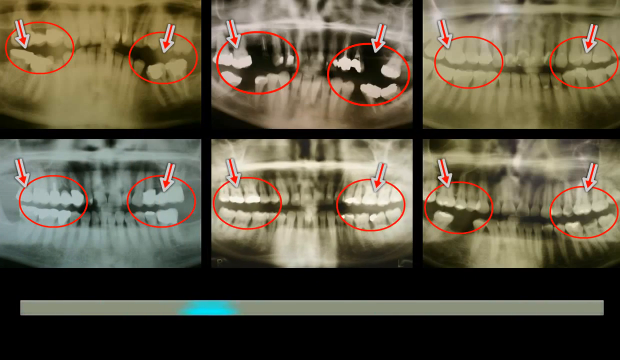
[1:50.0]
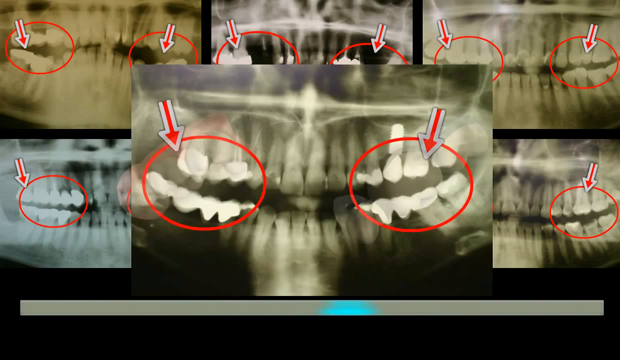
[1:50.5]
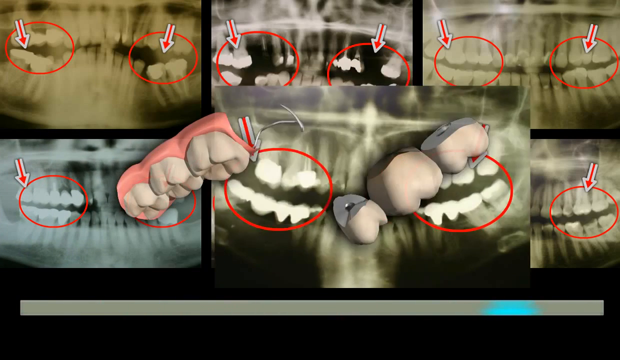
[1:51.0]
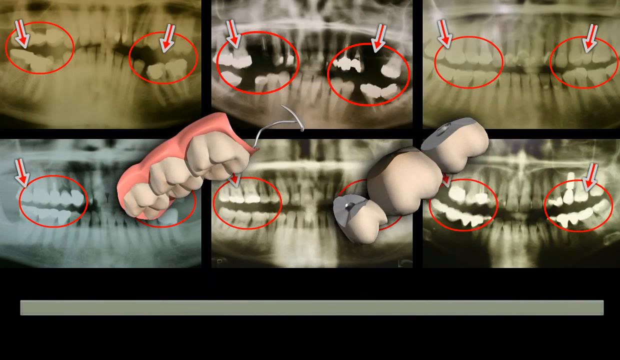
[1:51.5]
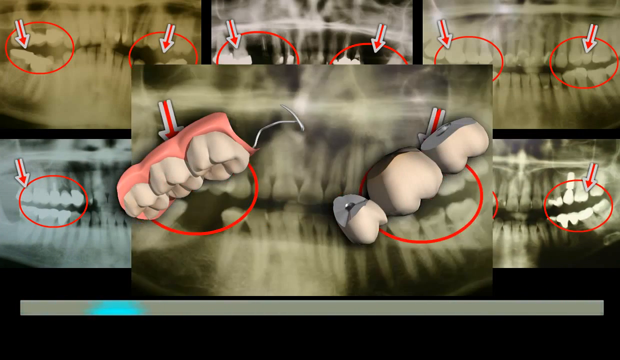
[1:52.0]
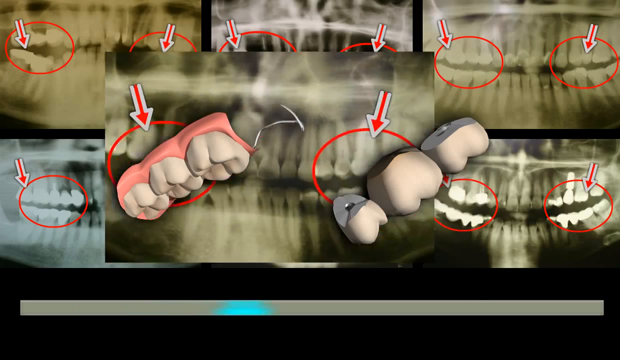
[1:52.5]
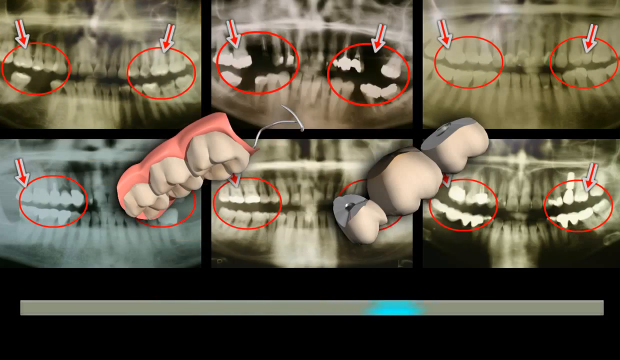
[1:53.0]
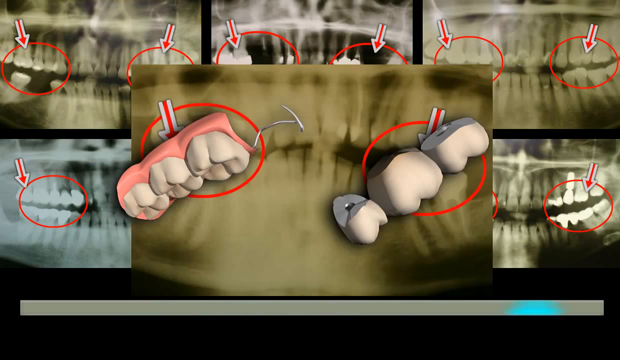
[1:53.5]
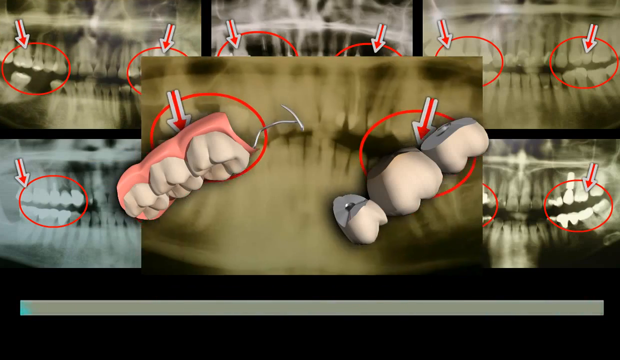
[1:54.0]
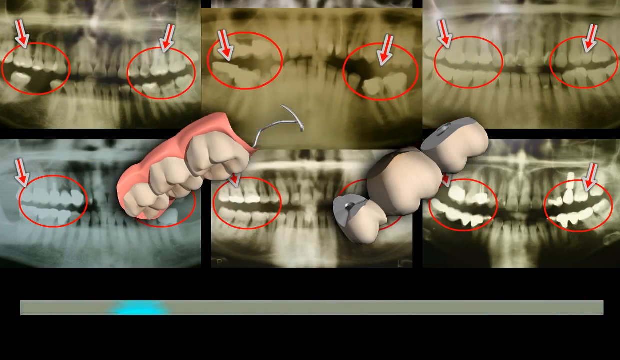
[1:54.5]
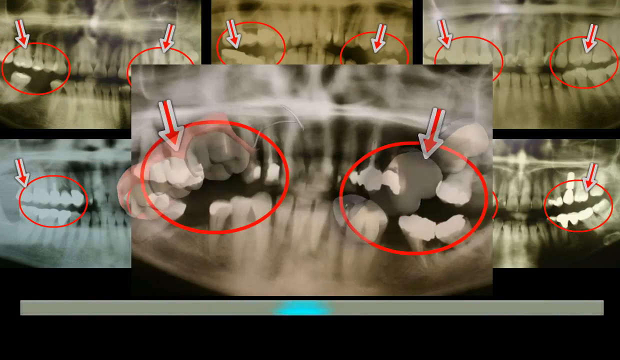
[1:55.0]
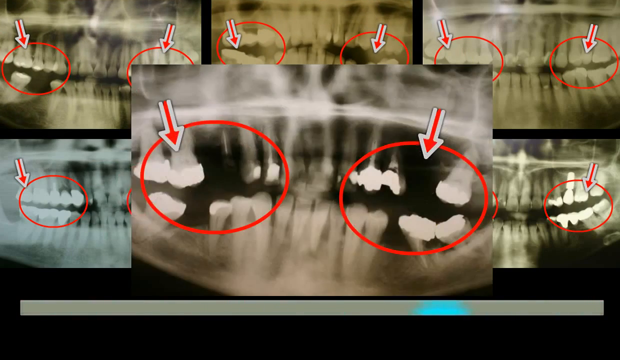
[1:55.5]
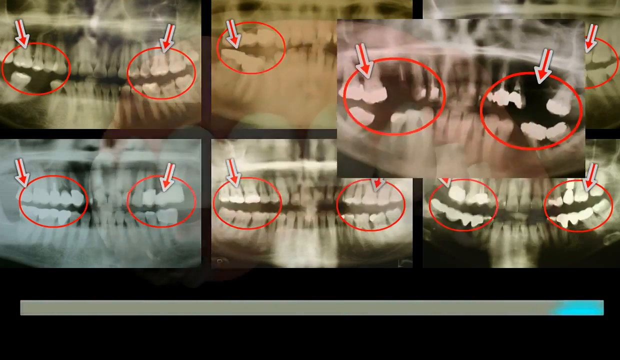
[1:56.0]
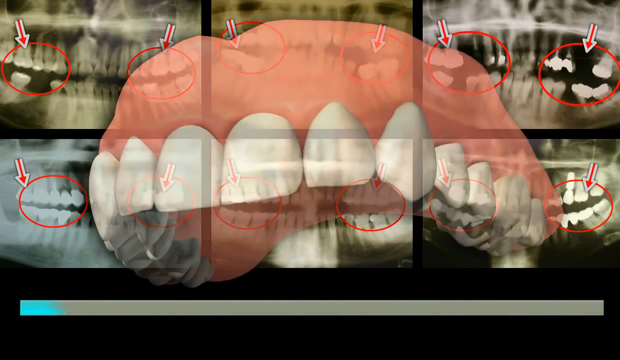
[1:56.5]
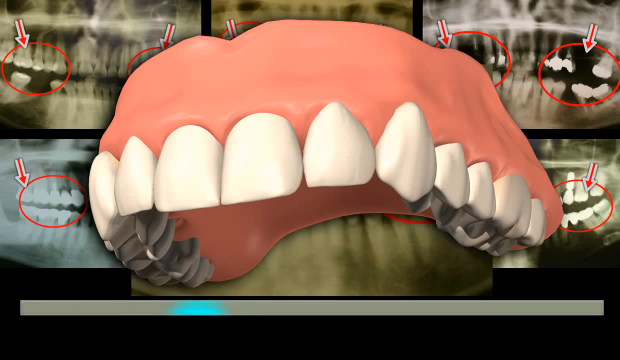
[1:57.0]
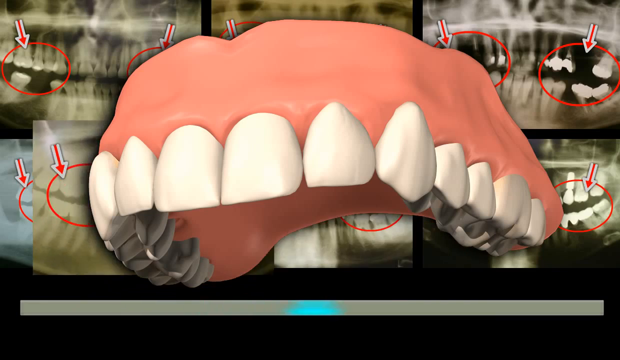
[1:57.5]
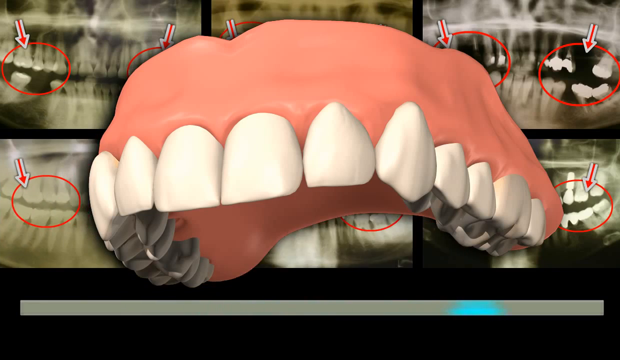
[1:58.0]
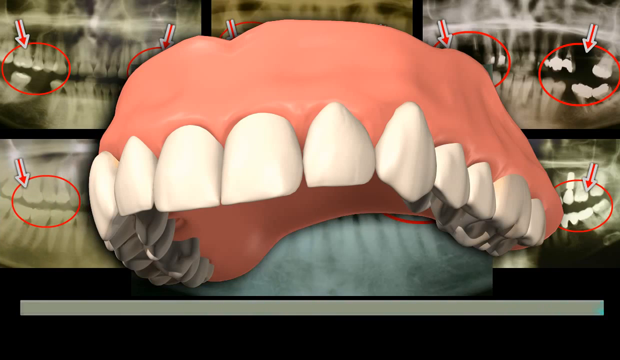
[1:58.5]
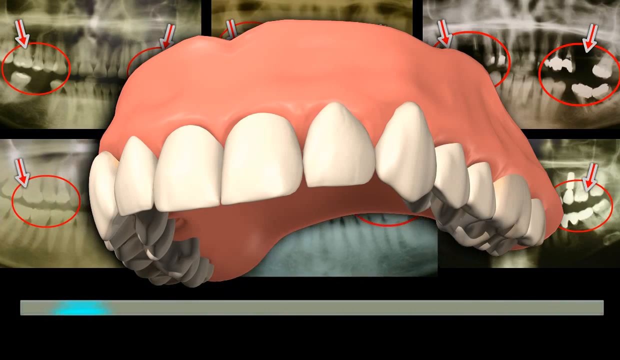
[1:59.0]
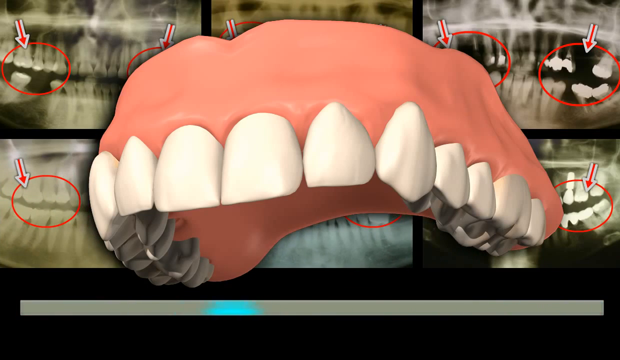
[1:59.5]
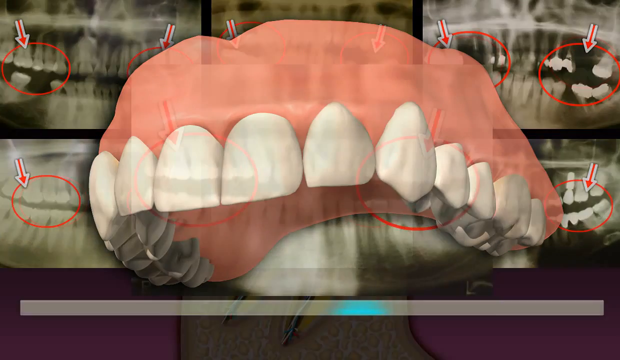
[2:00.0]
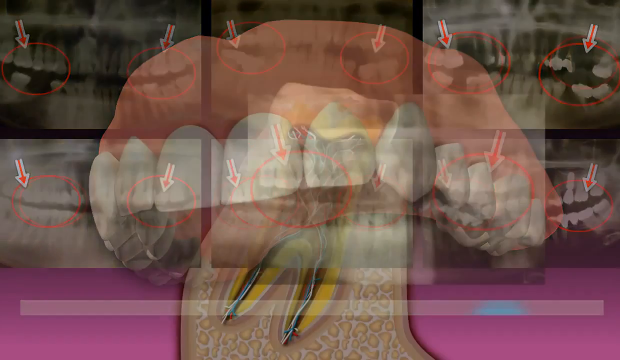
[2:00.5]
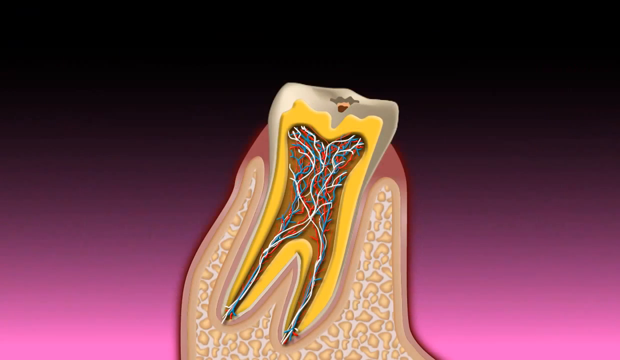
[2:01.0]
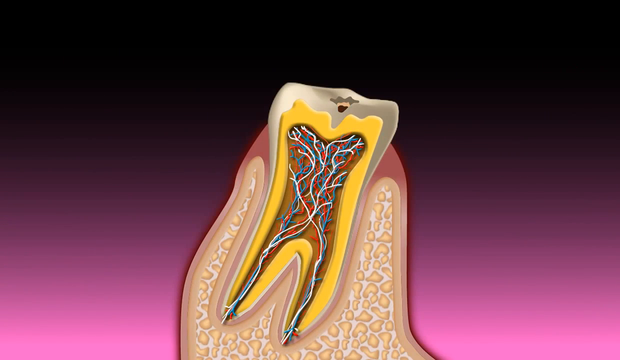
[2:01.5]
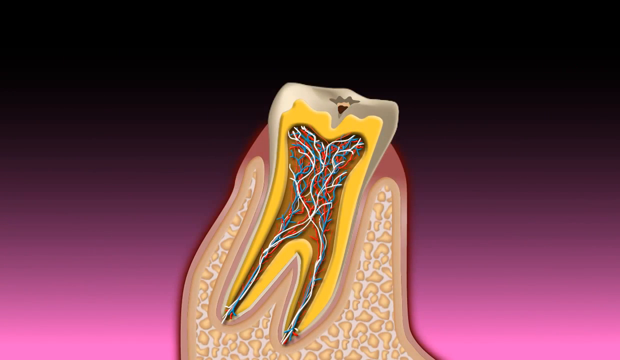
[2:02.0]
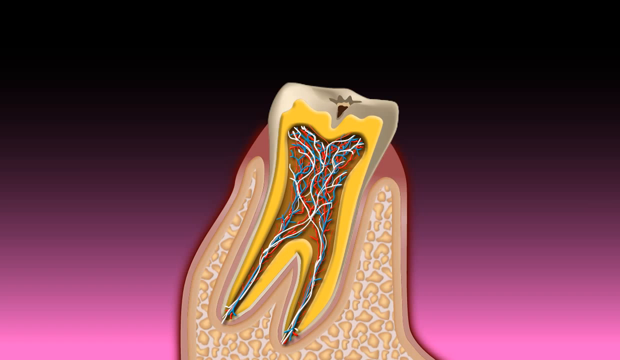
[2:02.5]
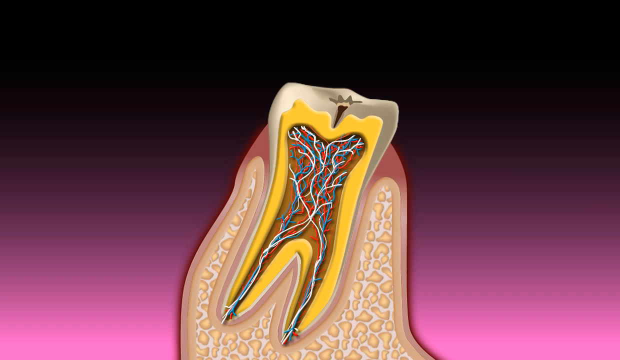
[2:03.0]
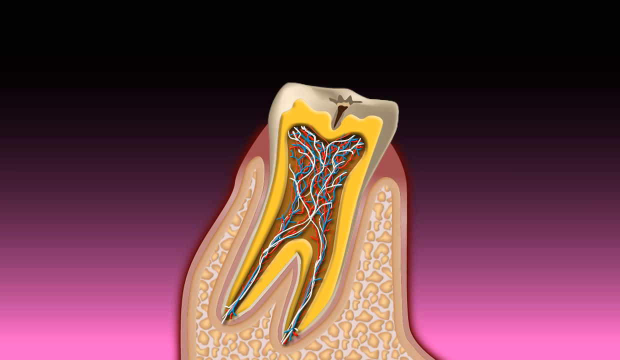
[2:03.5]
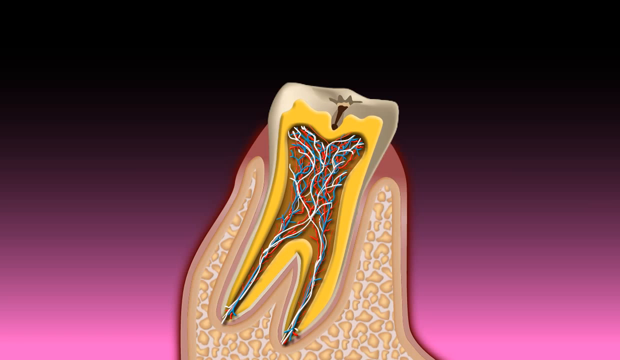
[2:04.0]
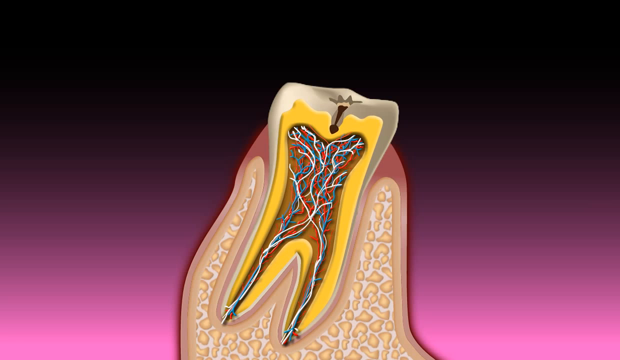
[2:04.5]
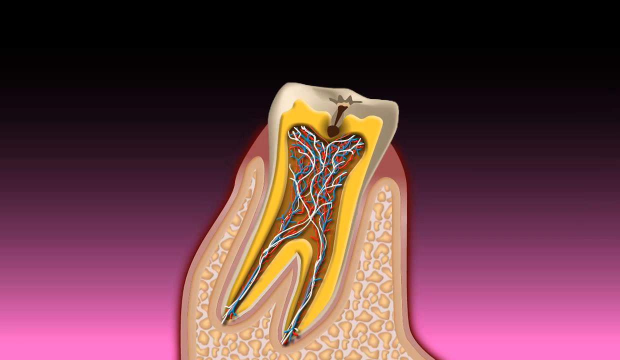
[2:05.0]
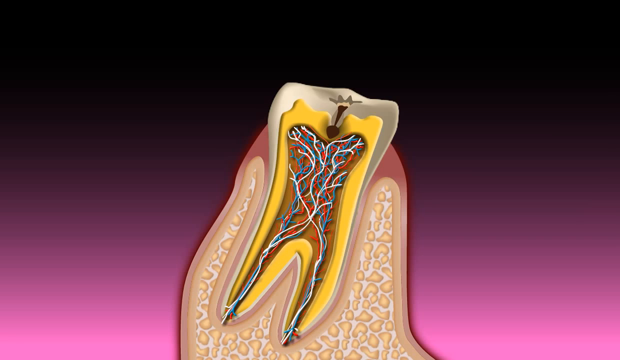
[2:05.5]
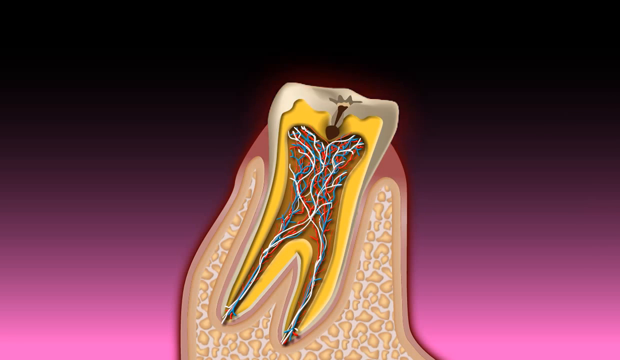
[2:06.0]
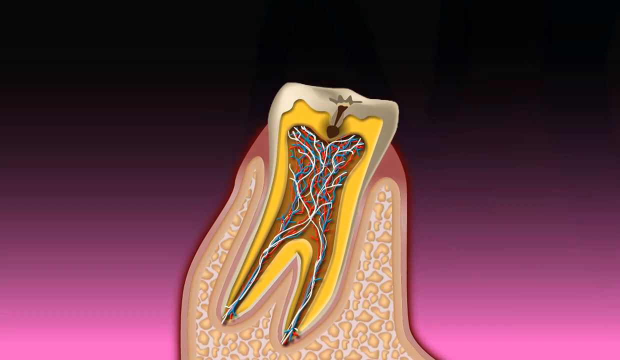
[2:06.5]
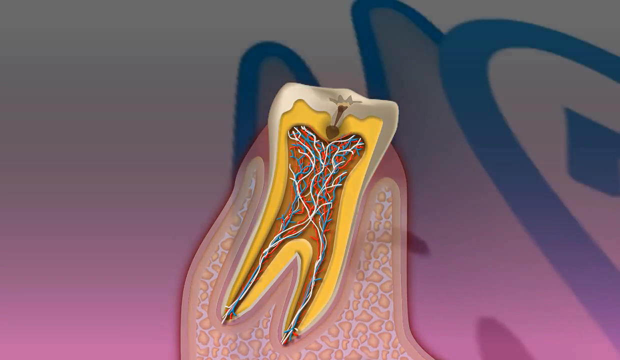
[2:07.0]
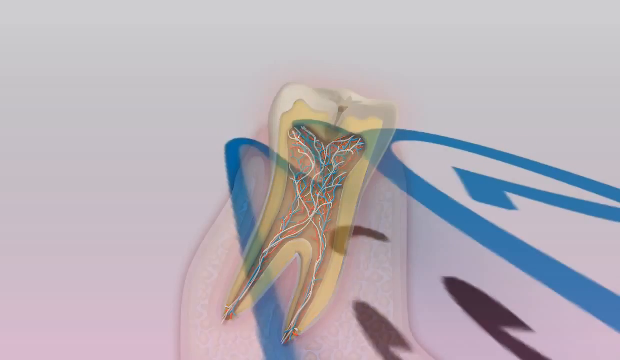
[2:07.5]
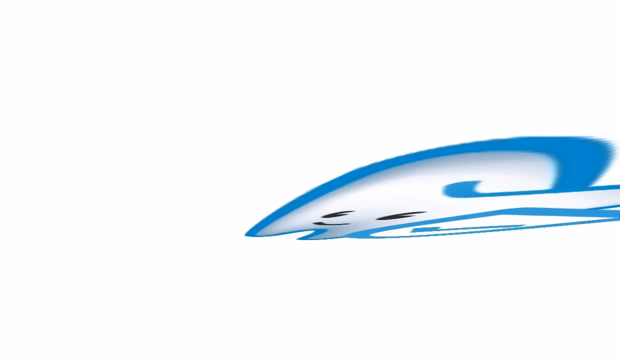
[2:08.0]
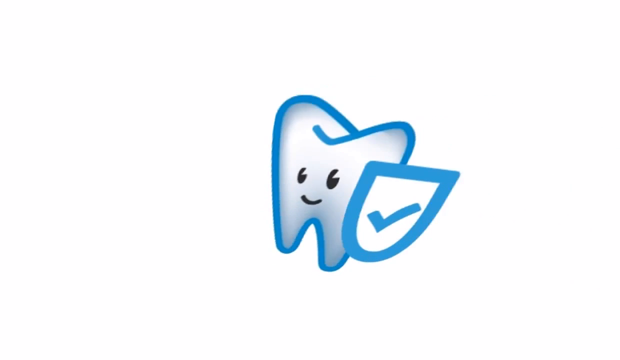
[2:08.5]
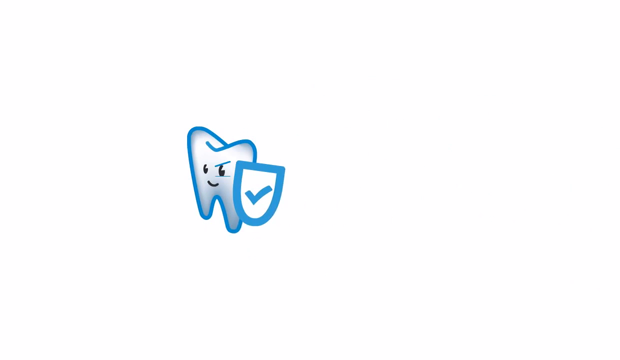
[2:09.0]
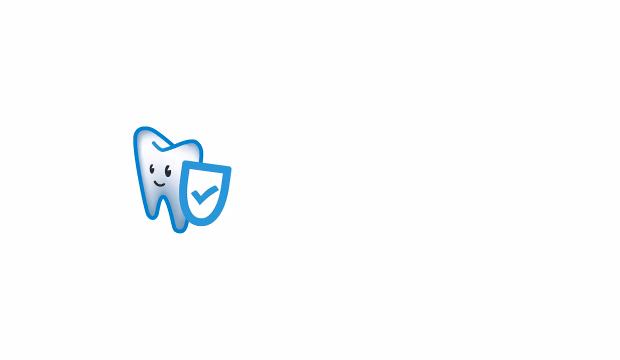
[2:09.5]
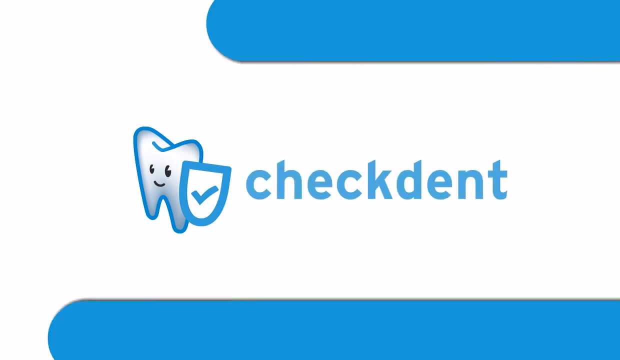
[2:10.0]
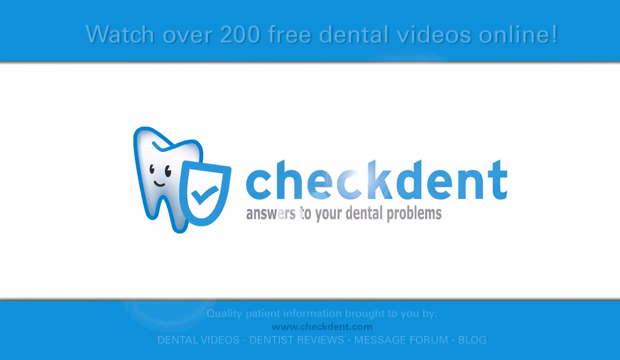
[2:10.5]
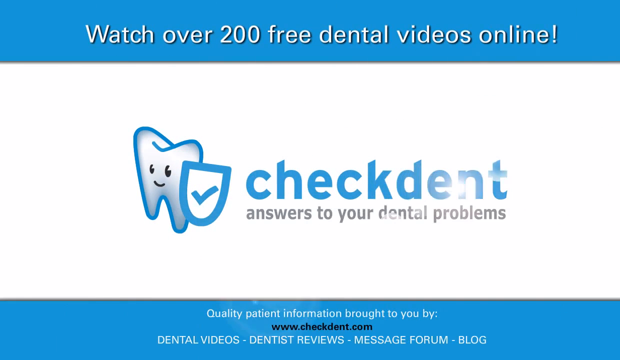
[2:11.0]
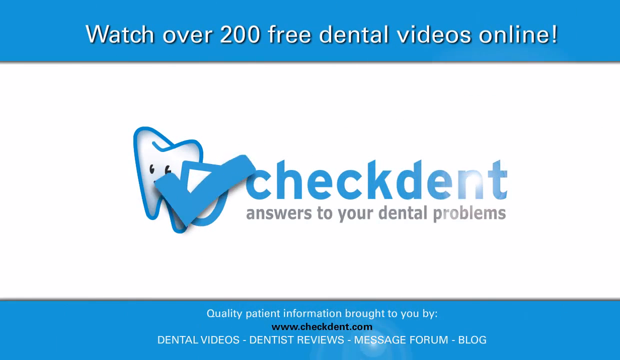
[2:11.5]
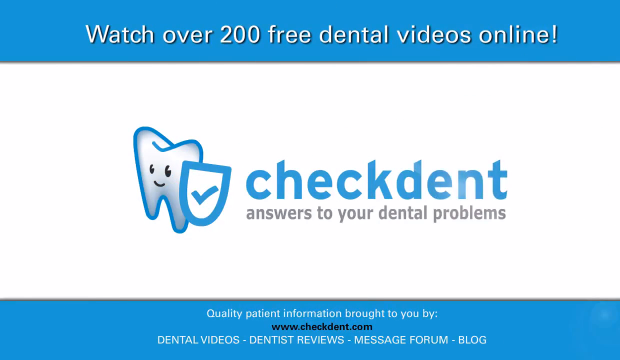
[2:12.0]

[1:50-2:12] Two rows of three X-rays of teeth are in the background, each with red circles on the left and right sides of the teeth and a red arrow pointing to each circle. The background X-rays are replaced by new ones, starting with the X-ray at the far right of the second row in the bottom right, then the top left, continuing through each row. In the center of the screen, a computer-animated section of a tooth with a gum attached appears on the left side, with three teeth on the right side. More background images are added. A computer animation of the top of a mouth shows the top teeth attached to the gums. A different animation shows a tooth sitting in a gum on a purple background, with a white outside and yellow insides containing thin white, blue and red nerve strands. An opening that appears to be a cavity starts at the top of the tooth and forms a hole in the center of its top. At the end, the blue tooth with the face appears with a blue shield with a check mark in its center to its right. The tooth flips from the forefront to the center of the screen, then moves to the left side. The words "check dent" appear in blue to the right of the tooth, followed by the sentence "answers to your dental problems". A large white section spans the center of the screen with blue sections at the top and bottom. At the top is the sentence "watch over 200 free dental videos online", at the bottom "quality patient information brought to you by www.checkdent.com", and below that "dental videos, dentist reviews, message form, blog".